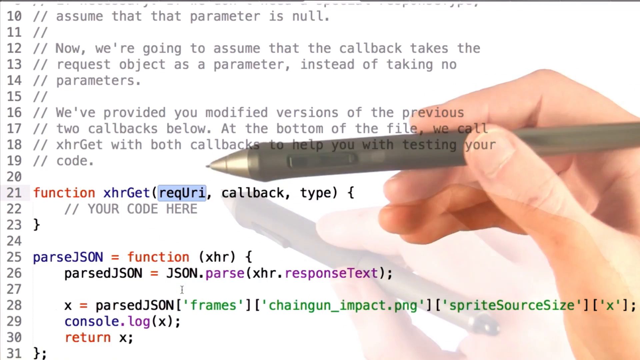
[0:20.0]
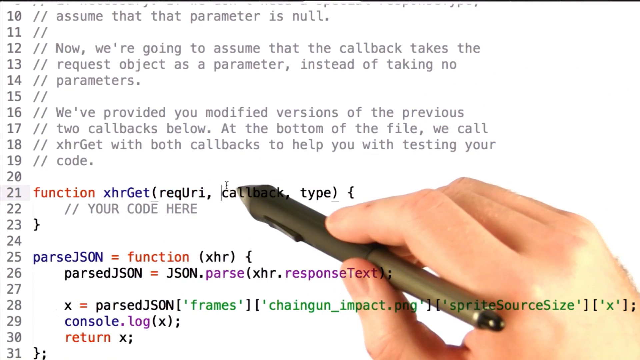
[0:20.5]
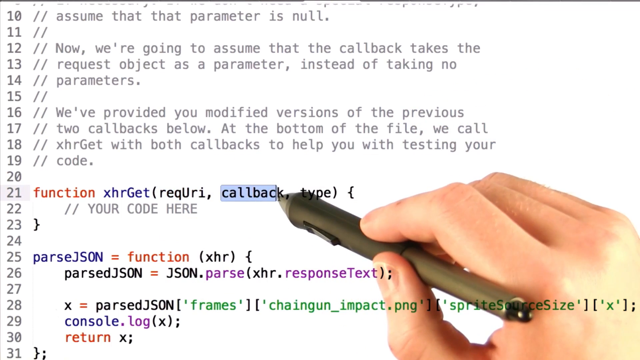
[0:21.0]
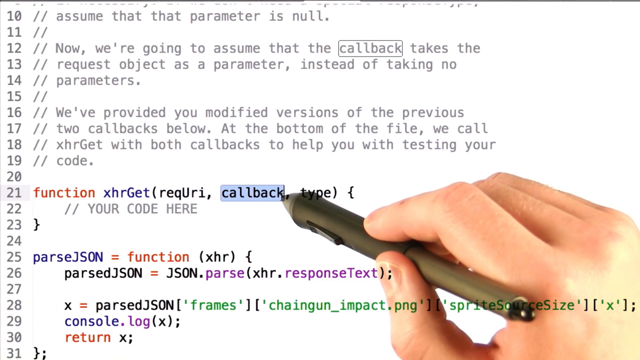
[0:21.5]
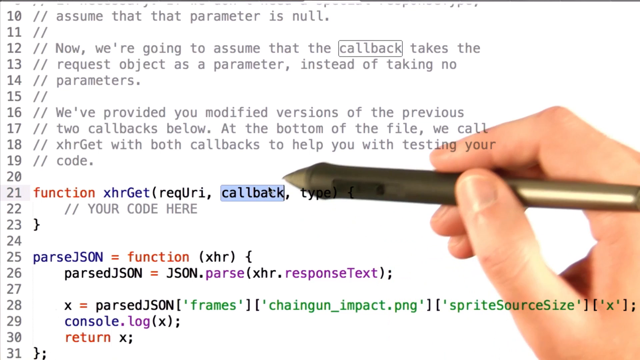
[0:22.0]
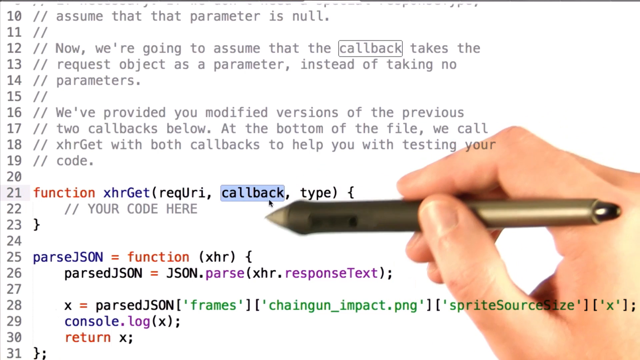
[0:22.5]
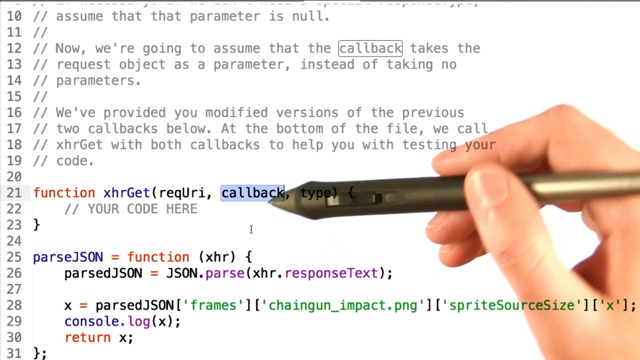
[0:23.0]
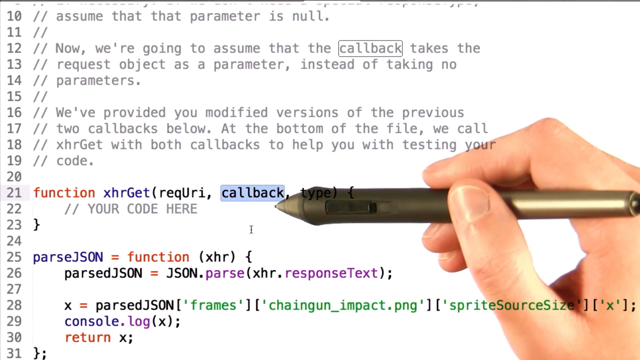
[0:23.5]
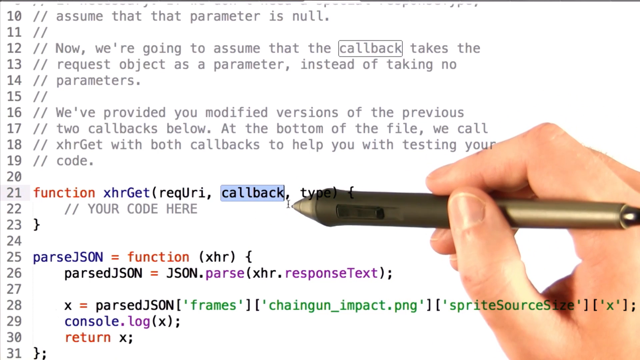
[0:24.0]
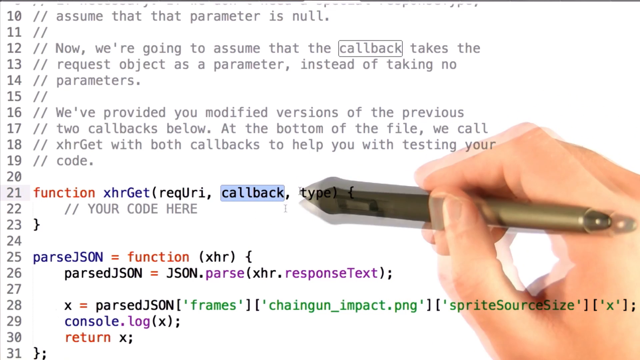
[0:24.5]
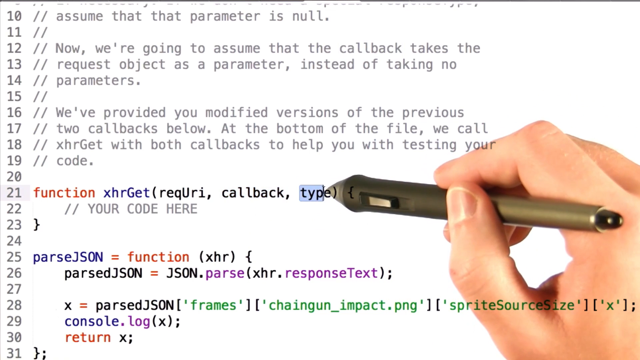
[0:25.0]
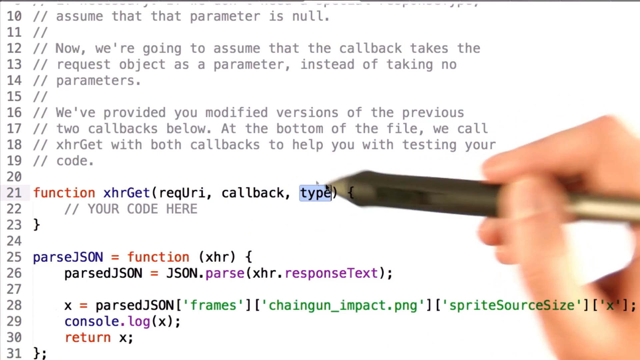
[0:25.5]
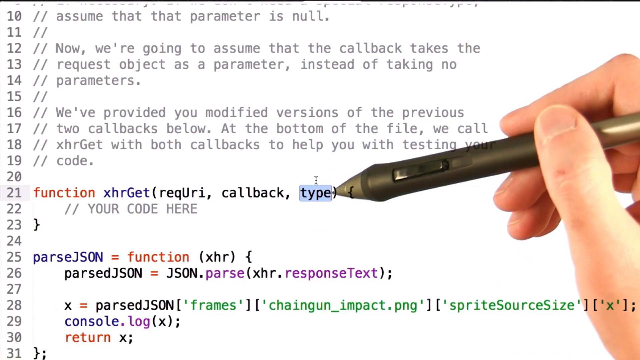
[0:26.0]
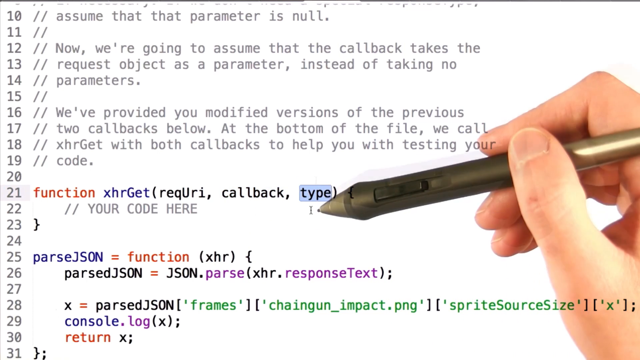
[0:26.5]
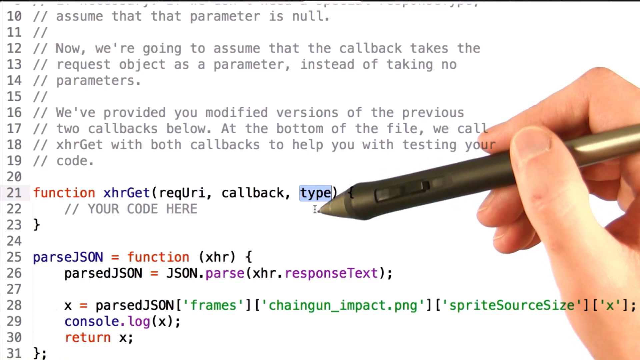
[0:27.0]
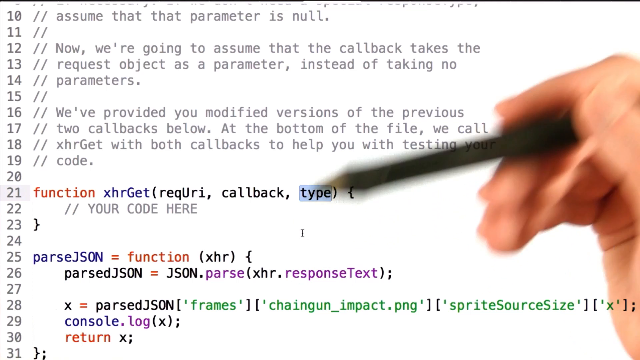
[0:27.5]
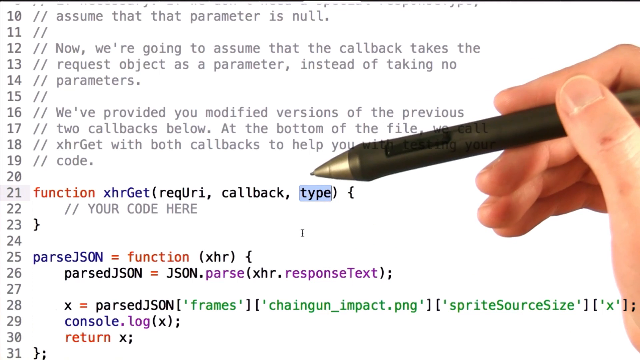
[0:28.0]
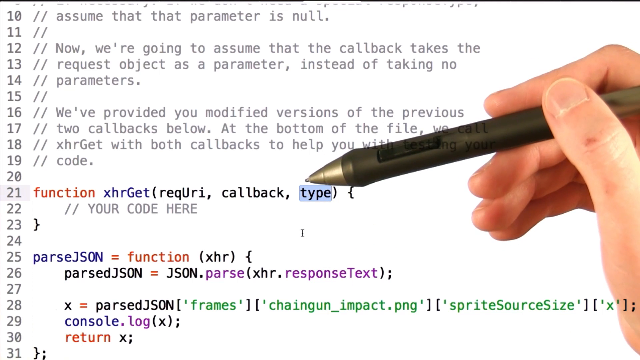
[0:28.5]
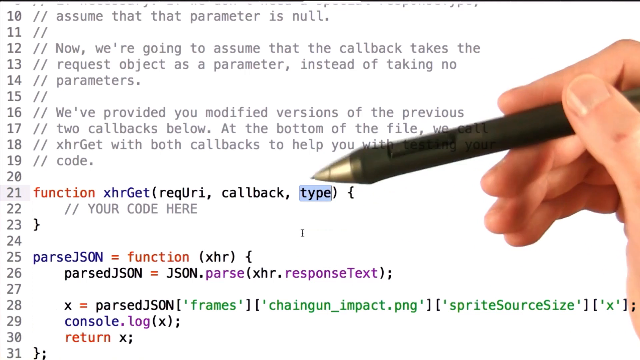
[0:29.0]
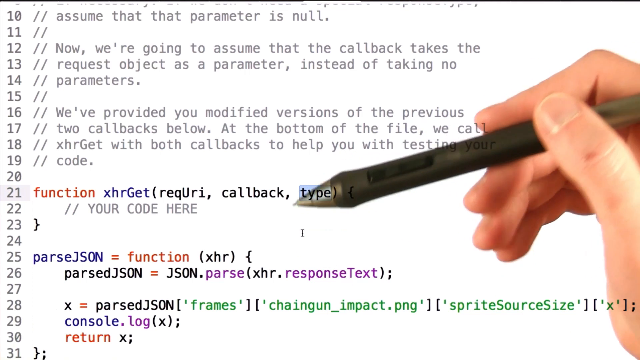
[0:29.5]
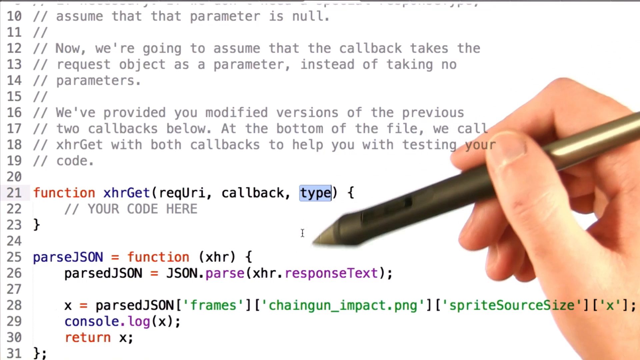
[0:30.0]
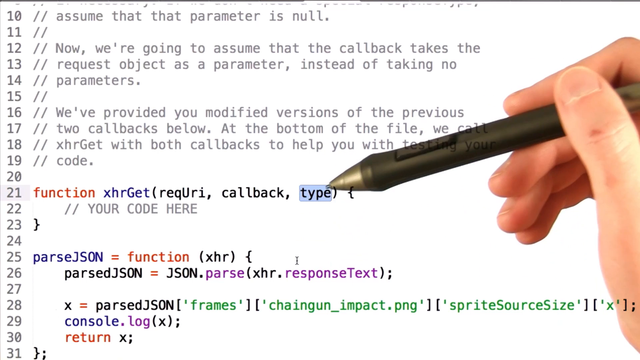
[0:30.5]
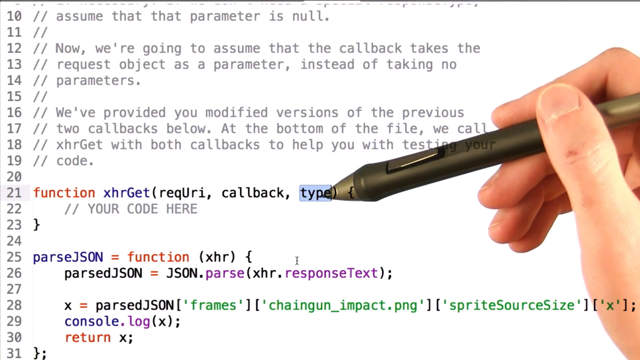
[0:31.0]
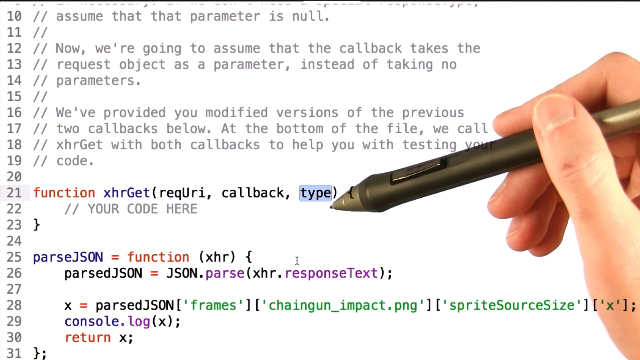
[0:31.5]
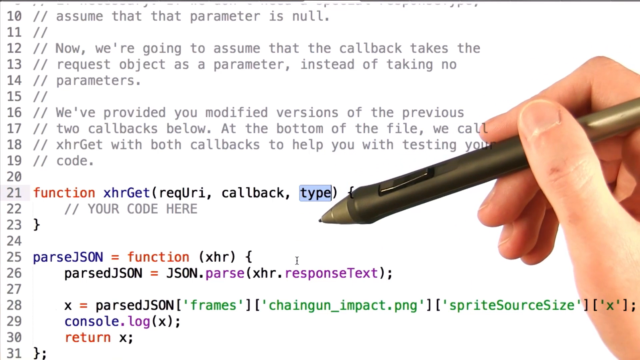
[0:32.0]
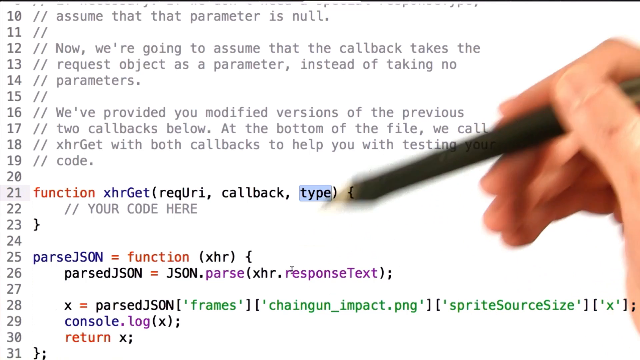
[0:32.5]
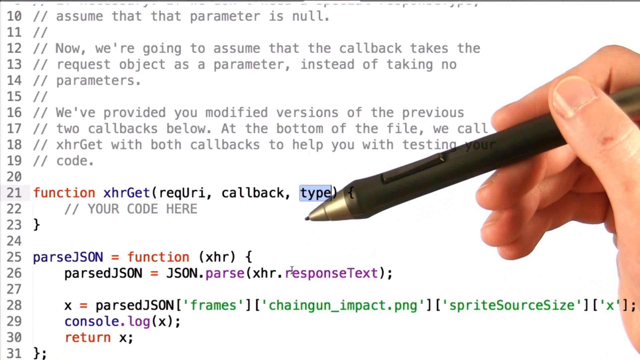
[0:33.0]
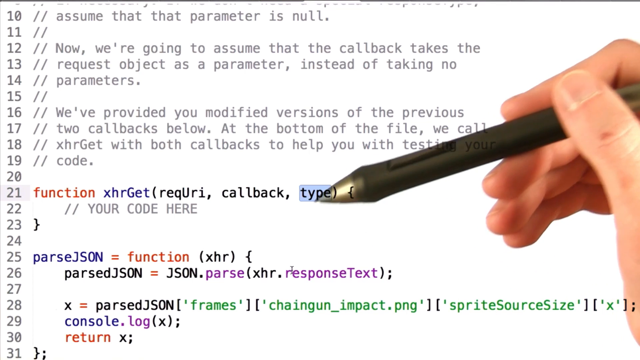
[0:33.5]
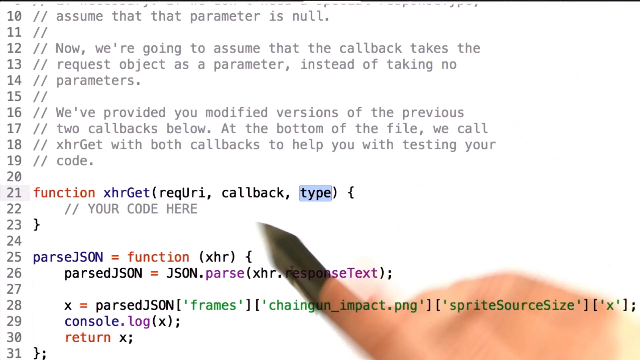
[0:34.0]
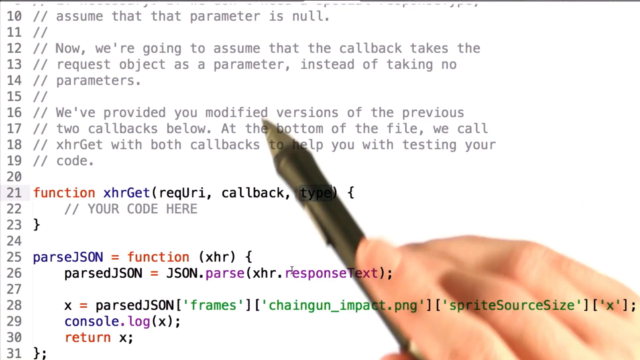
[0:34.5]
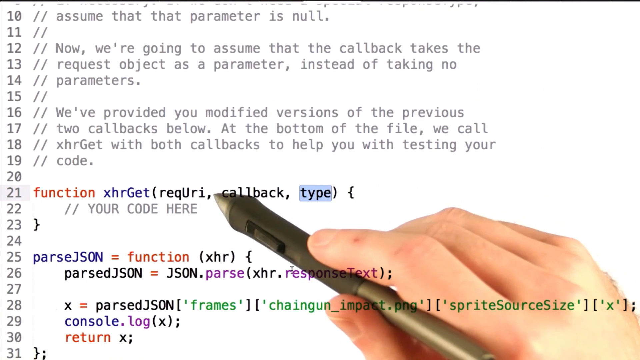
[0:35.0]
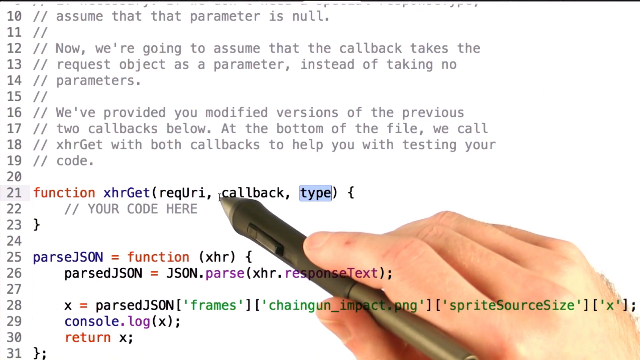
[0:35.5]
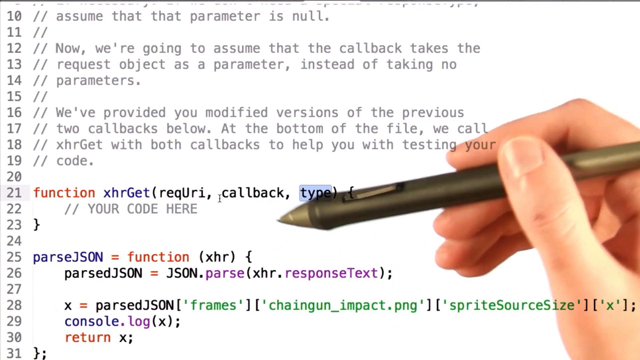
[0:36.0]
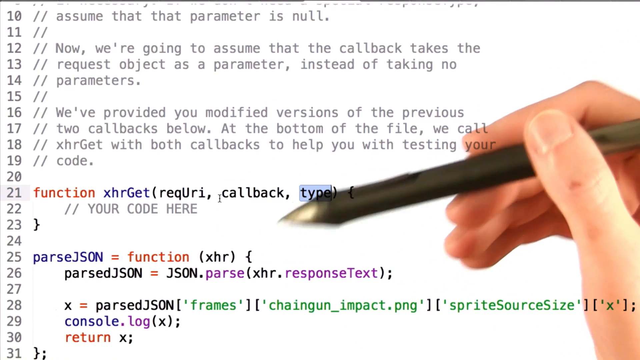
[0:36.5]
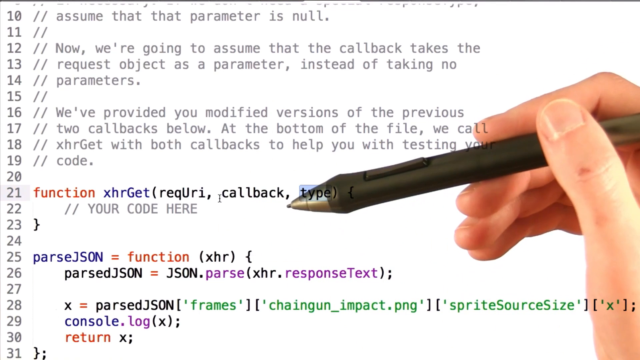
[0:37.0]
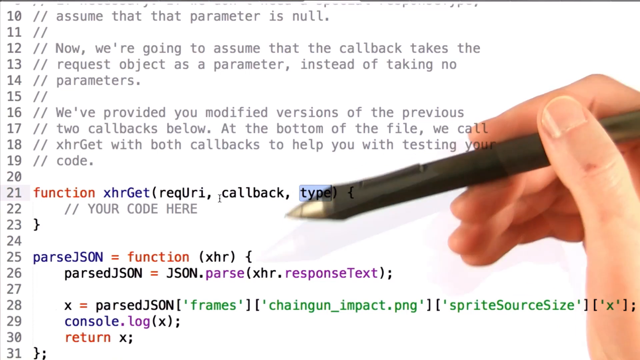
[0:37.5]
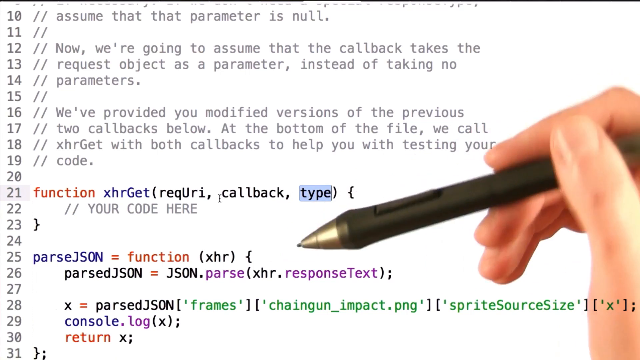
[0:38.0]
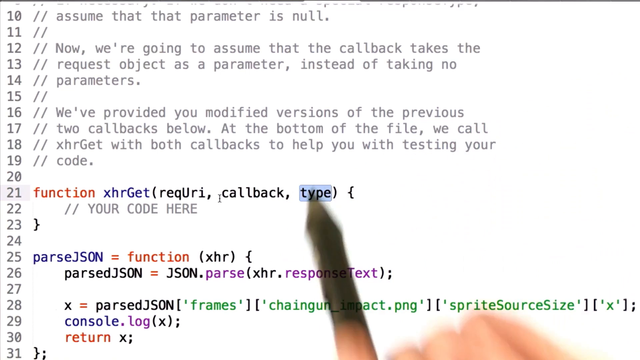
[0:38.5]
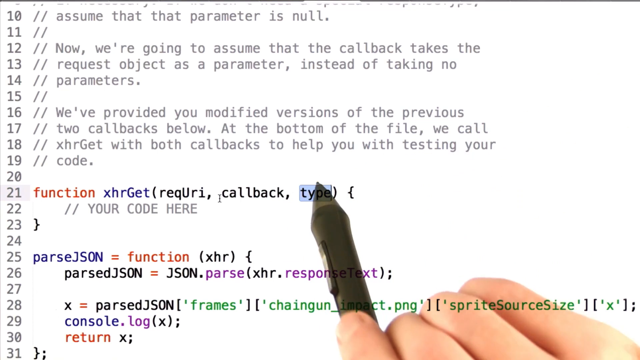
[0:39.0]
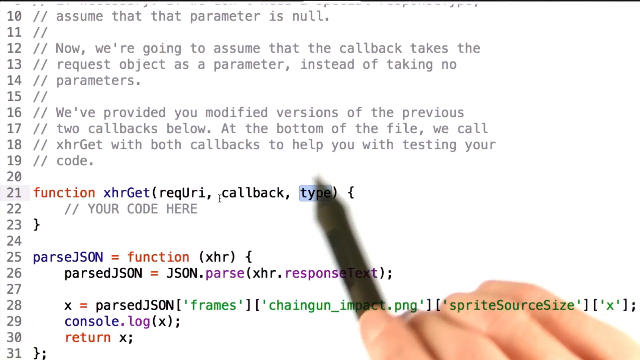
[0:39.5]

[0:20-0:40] A white background shows the numbers 10 to 31 in grey running down the left-hand side. On lines 10 to 19, two slashes precede some grey text. Below that is code in black, purple, orange, blue, or green, with a varying amount of code per line and some blank lines. Behind all of this is a person's right hand holding a pen. The pen highlights the word callback on line 21 and moves around as if indicating something, then highlights the word type on line 21 and again moves around as if the person is talking or explaining something. It then points to various pieces of the text, including the word type and parts of the gray text at the top. The code stays stationary, with only the hand and pen moving.